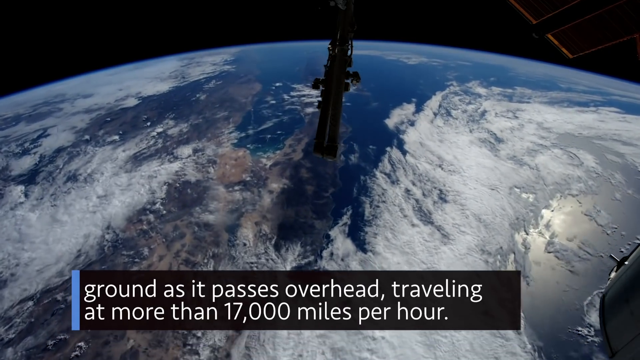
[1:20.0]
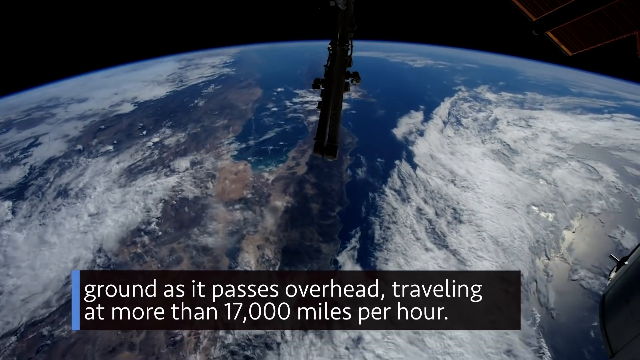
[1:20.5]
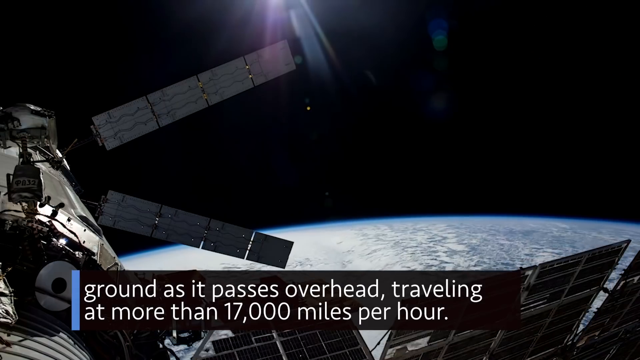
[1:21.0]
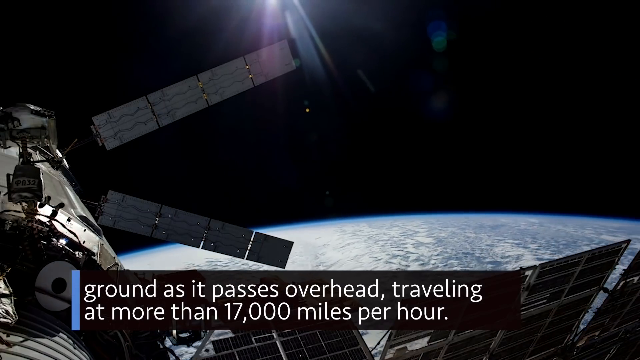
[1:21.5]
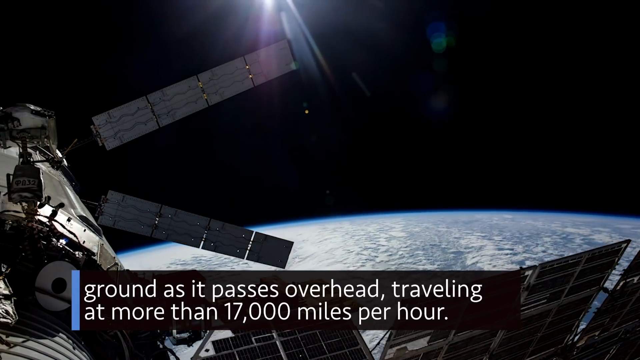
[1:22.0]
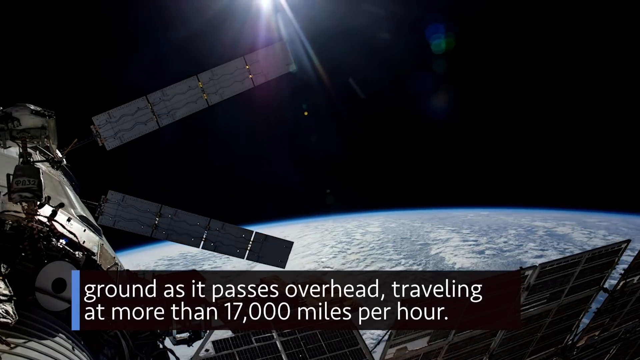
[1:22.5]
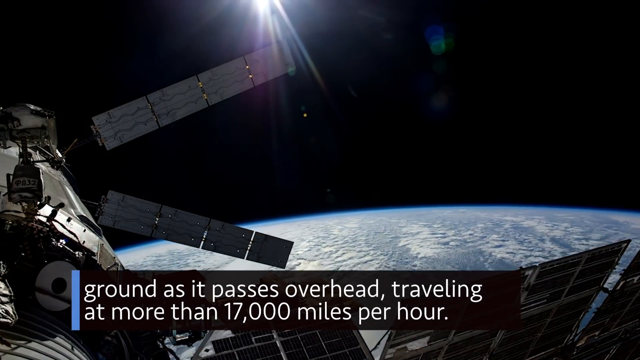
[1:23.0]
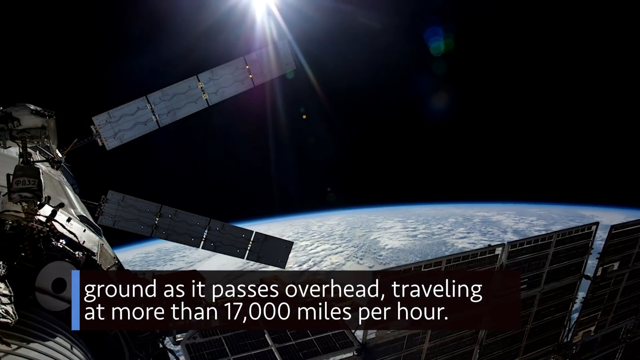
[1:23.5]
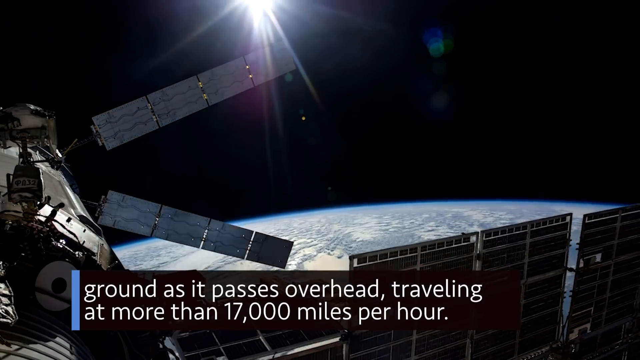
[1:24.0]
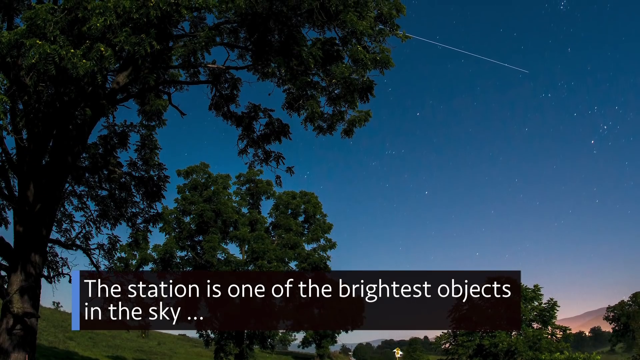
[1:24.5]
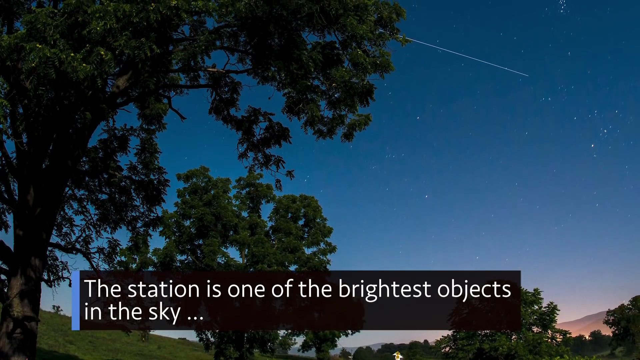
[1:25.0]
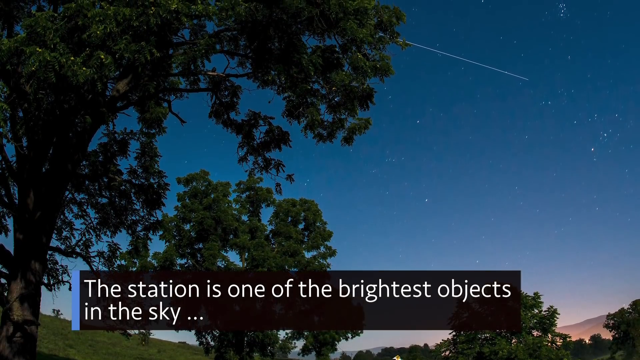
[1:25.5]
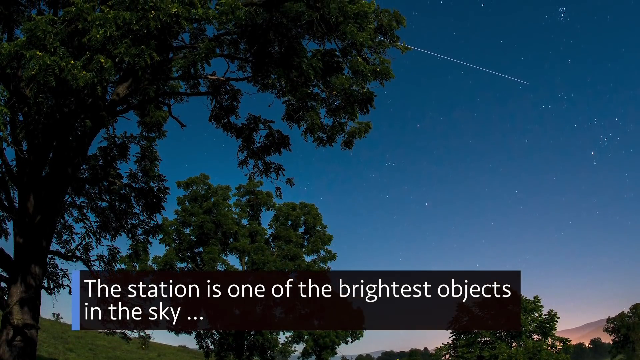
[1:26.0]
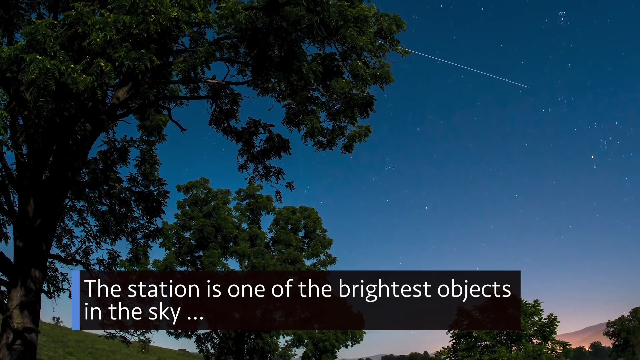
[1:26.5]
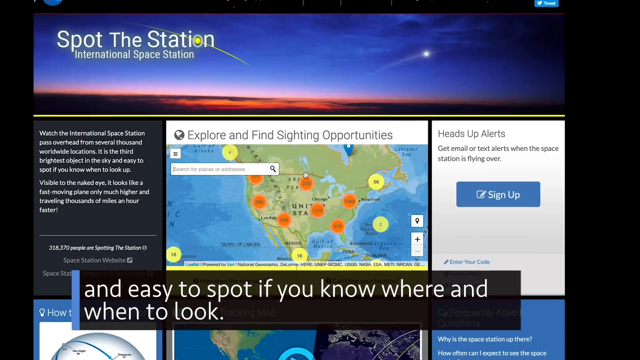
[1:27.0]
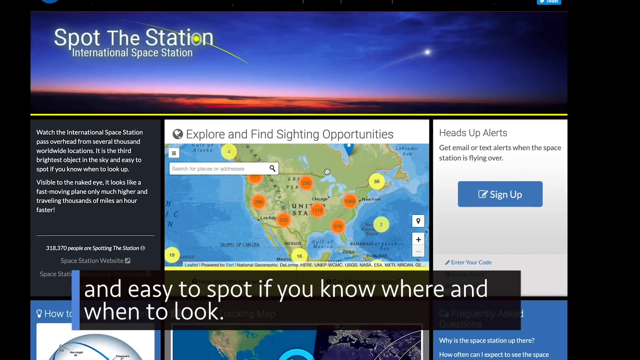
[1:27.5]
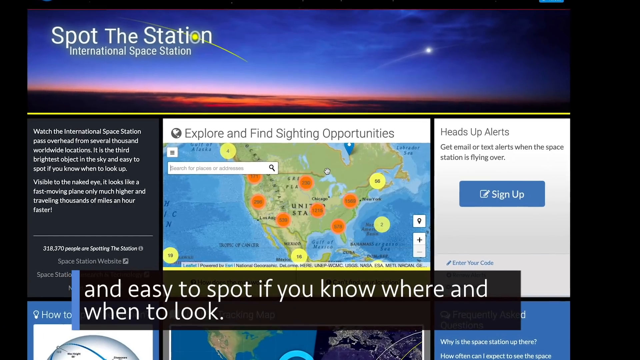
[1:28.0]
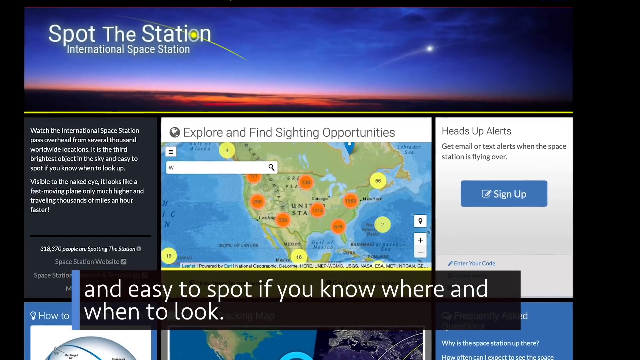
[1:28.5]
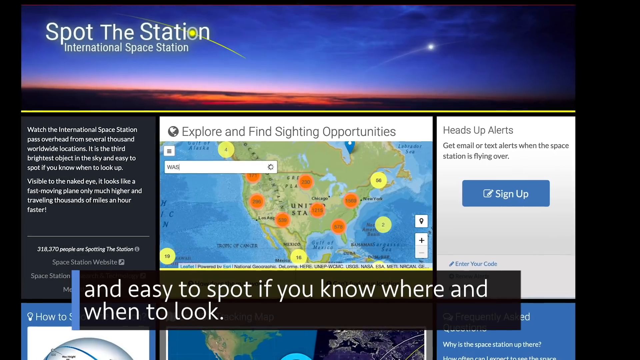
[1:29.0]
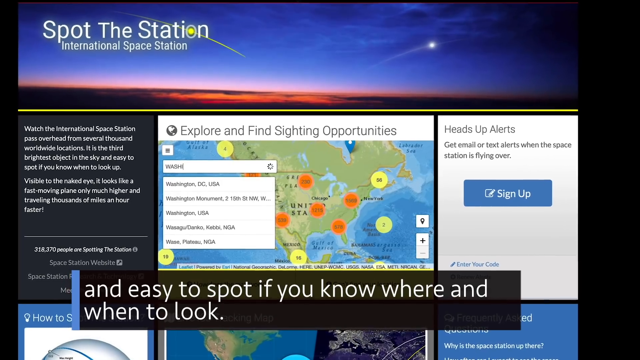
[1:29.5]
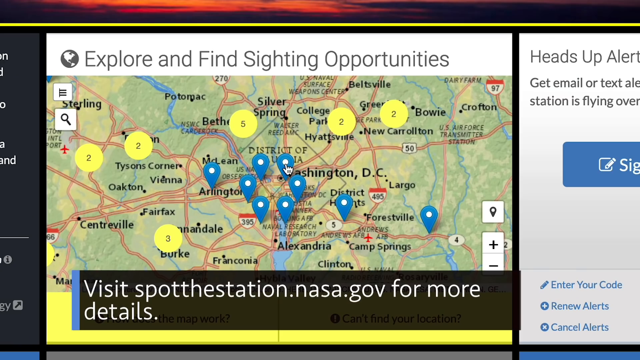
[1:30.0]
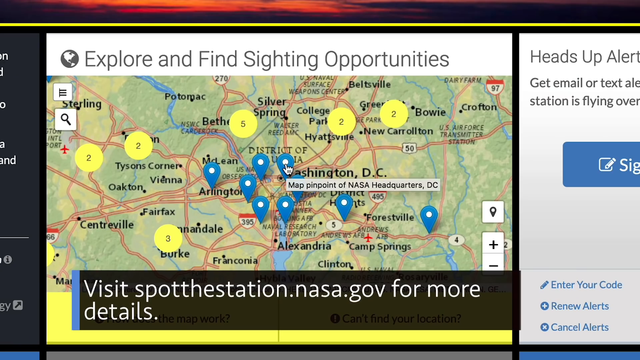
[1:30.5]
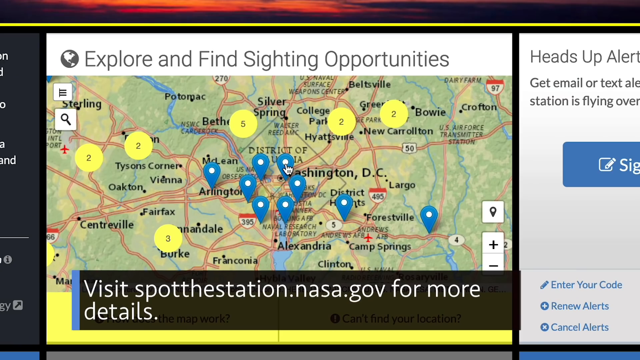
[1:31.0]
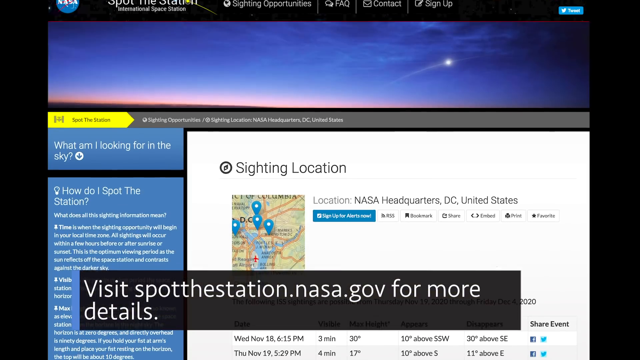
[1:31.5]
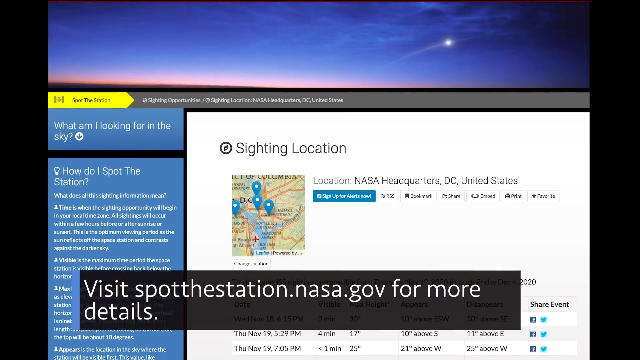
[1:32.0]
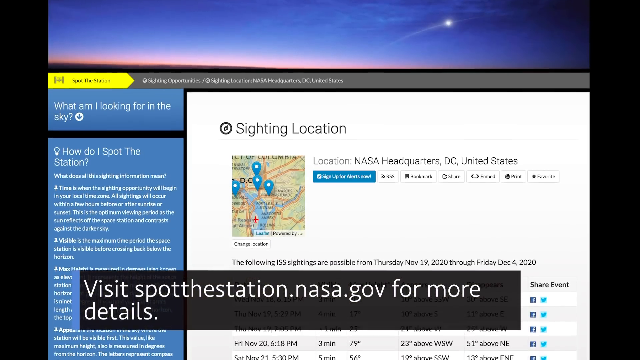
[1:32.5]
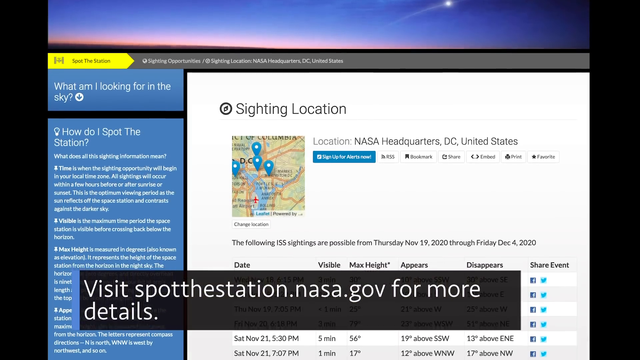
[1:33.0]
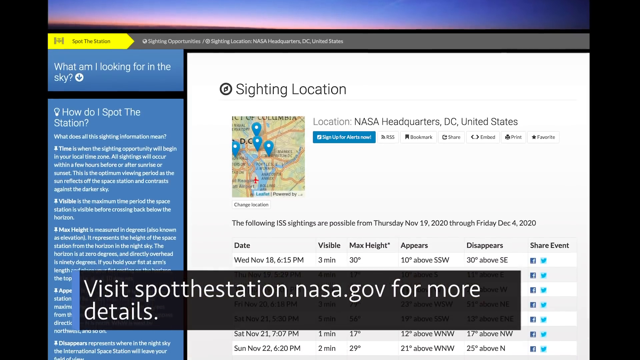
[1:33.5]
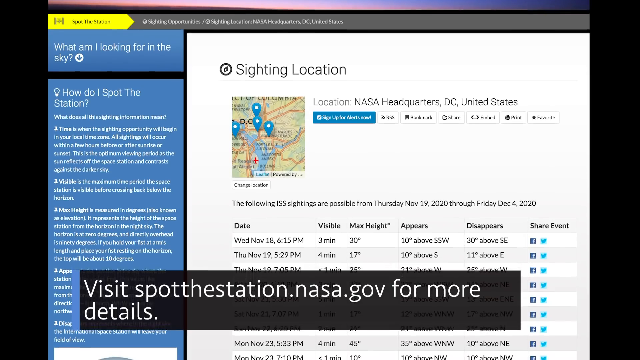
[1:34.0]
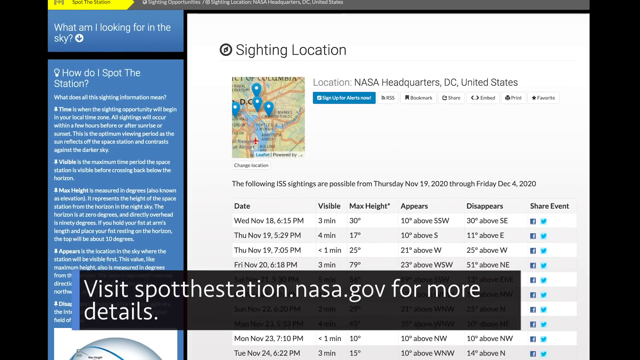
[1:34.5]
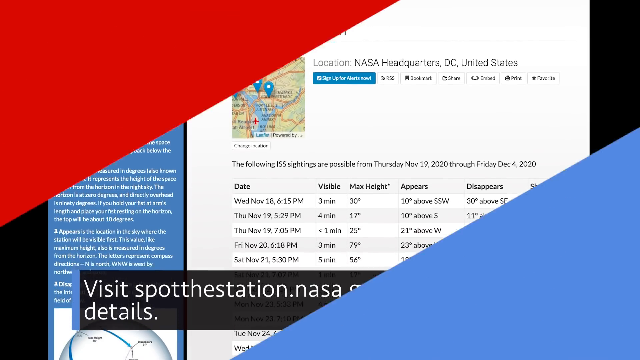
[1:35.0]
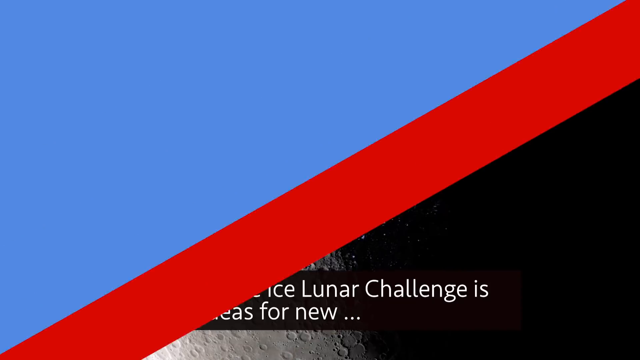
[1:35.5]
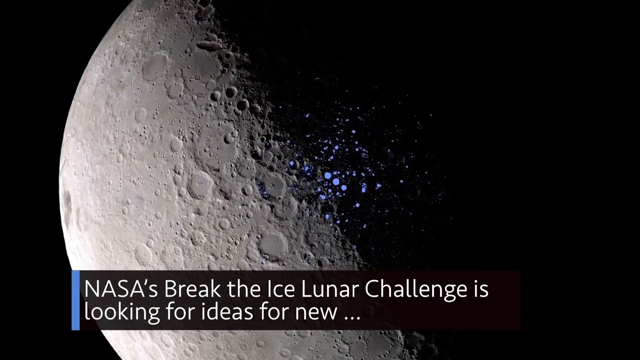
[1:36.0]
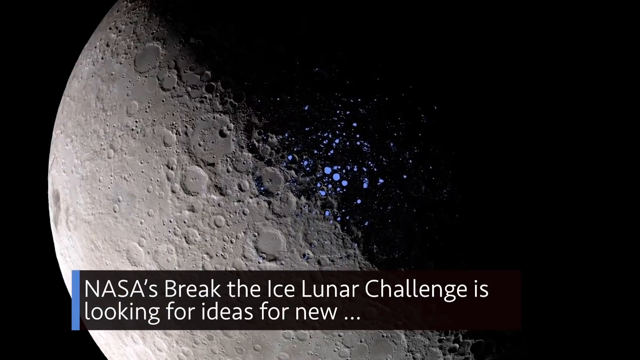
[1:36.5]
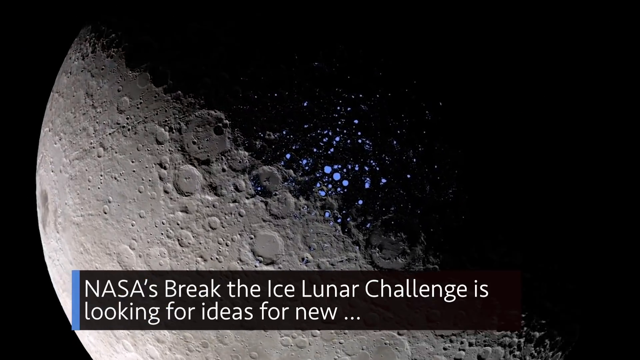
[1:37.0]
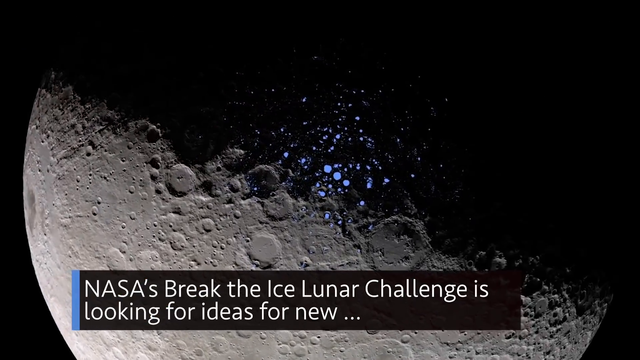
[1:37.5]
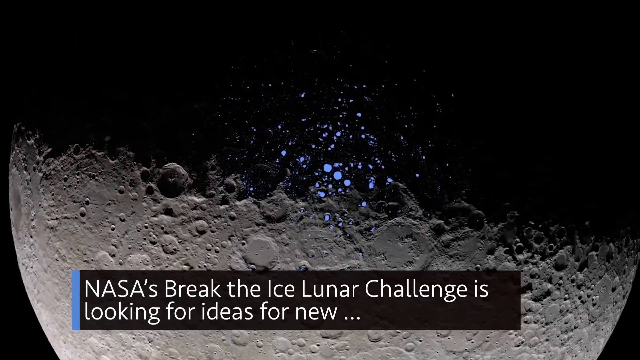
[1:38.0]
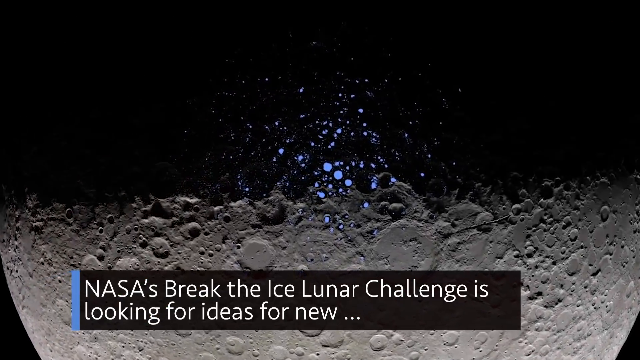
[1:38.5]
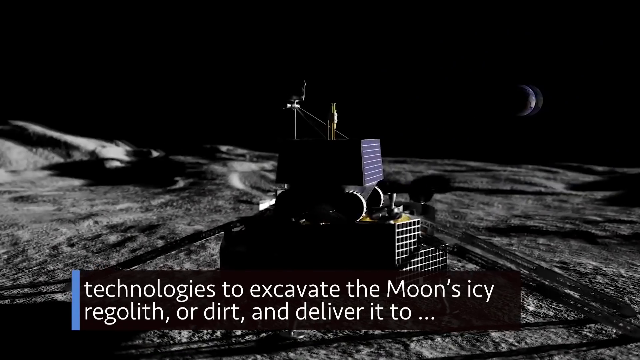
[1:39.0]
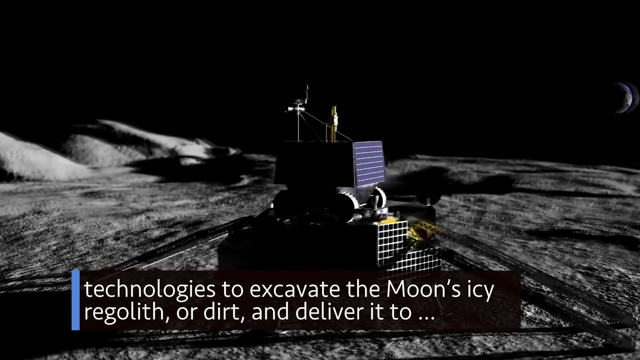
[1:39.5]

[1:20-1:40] Pictures show the outside of the space station as it flies through space. Then a picture of the night sky appears, followed by the Spot the Station website and another picture of a map on the website citing a location, which moves right across the screen.